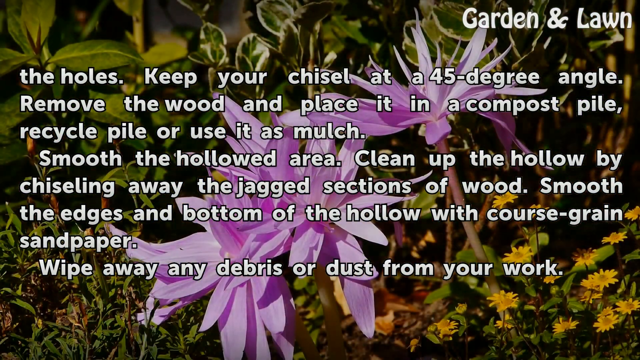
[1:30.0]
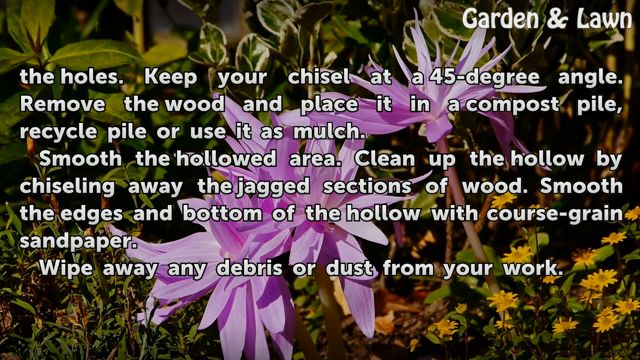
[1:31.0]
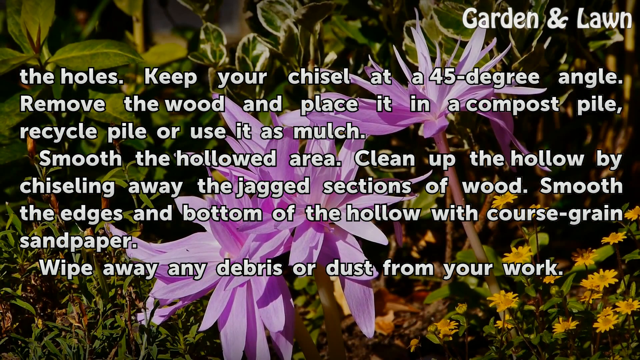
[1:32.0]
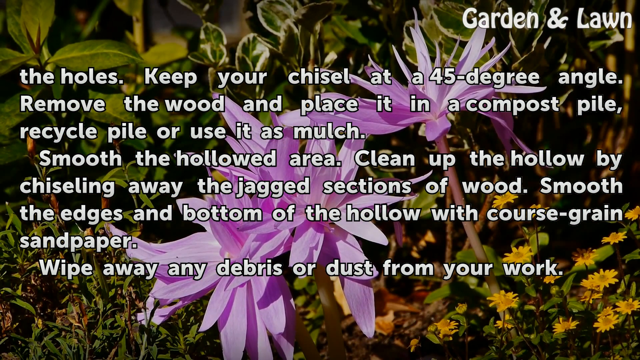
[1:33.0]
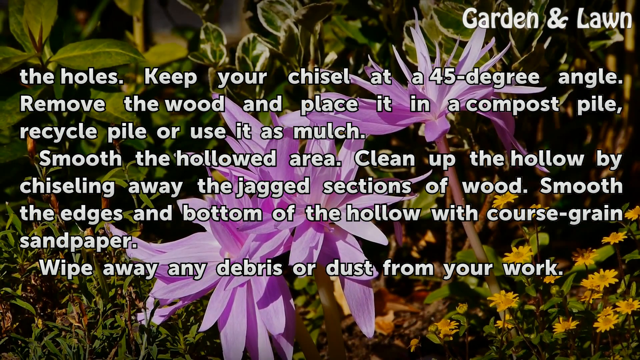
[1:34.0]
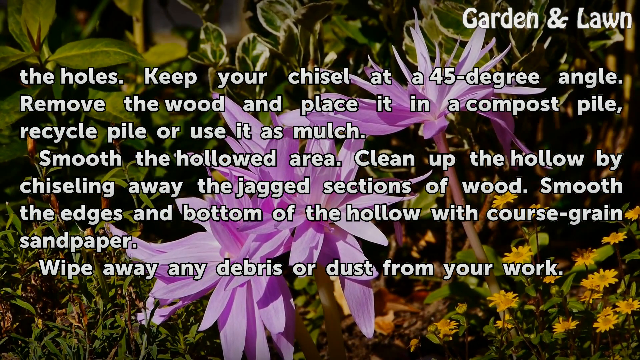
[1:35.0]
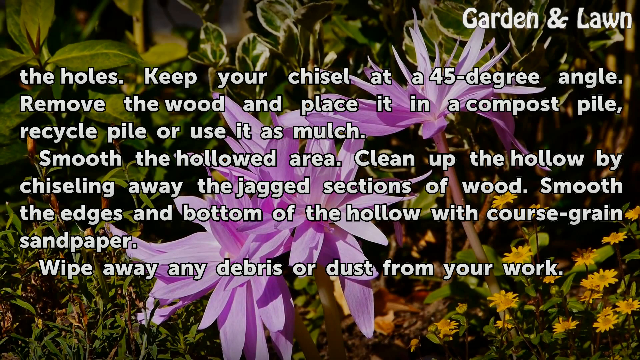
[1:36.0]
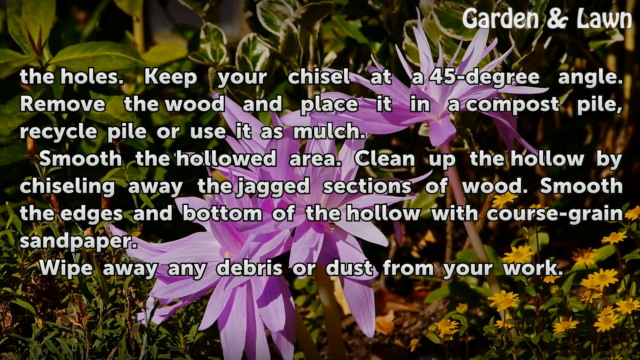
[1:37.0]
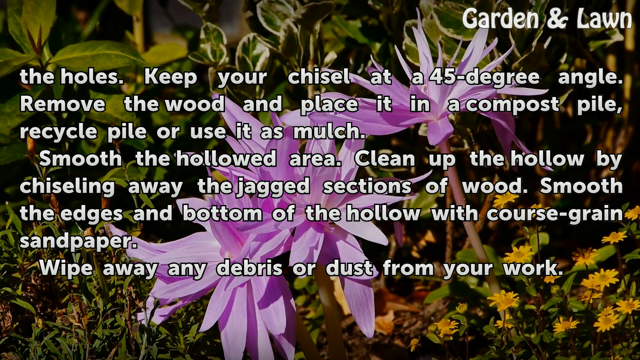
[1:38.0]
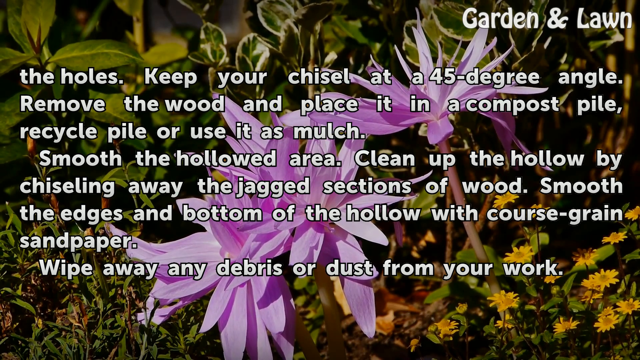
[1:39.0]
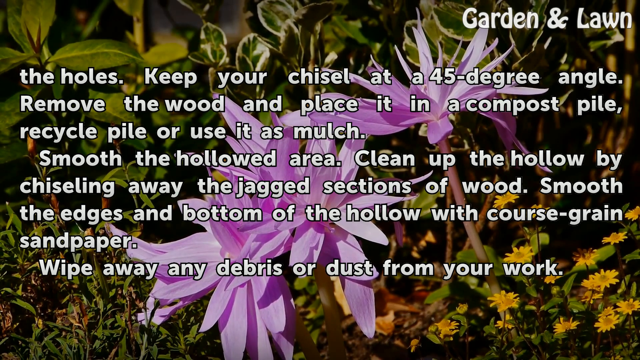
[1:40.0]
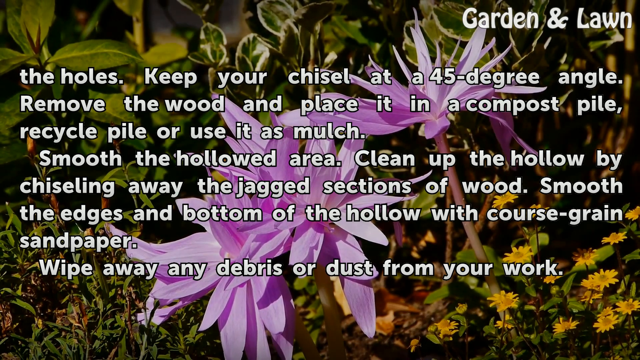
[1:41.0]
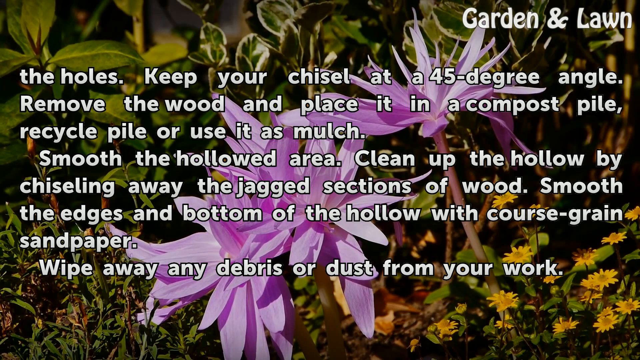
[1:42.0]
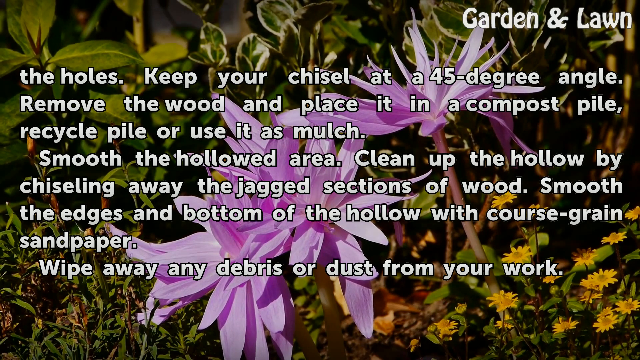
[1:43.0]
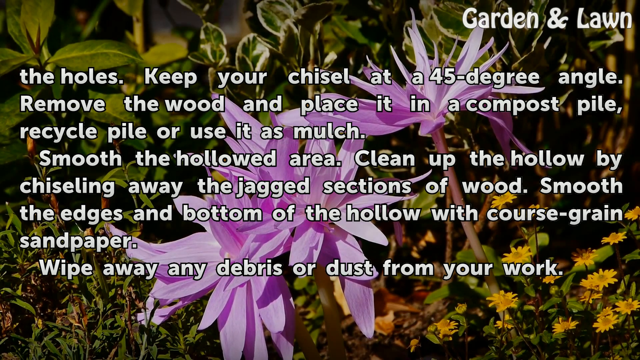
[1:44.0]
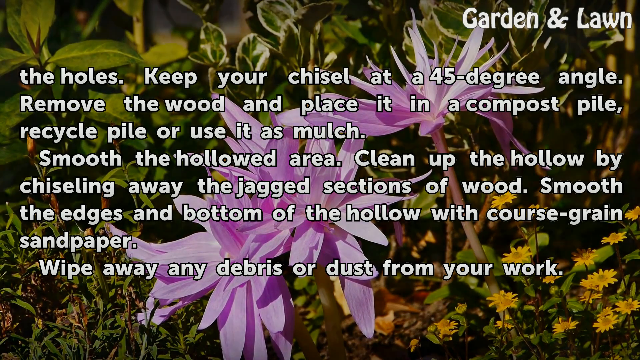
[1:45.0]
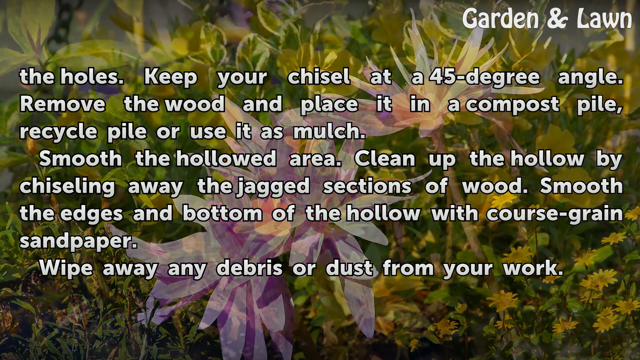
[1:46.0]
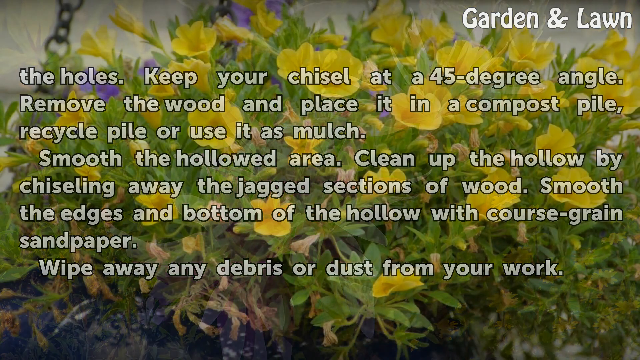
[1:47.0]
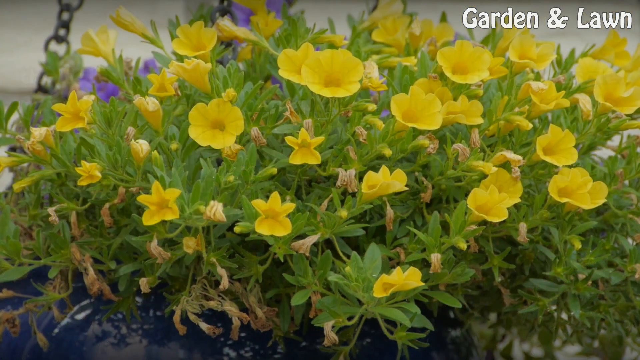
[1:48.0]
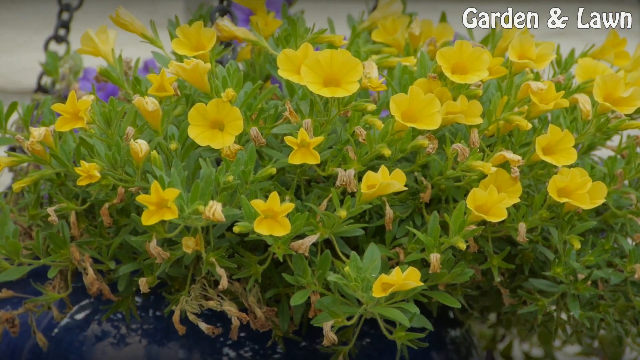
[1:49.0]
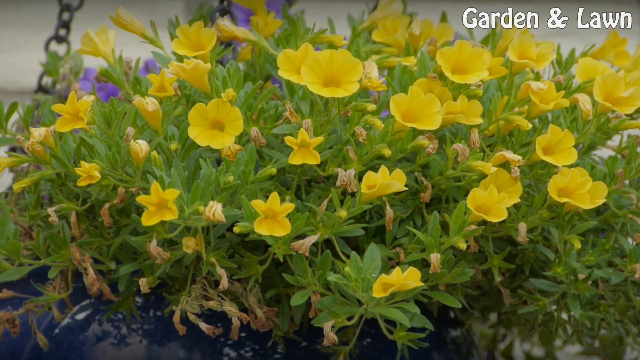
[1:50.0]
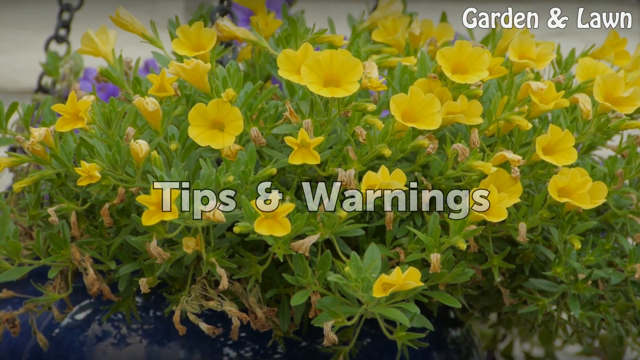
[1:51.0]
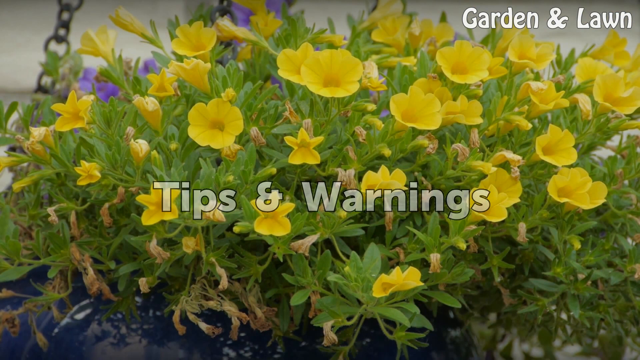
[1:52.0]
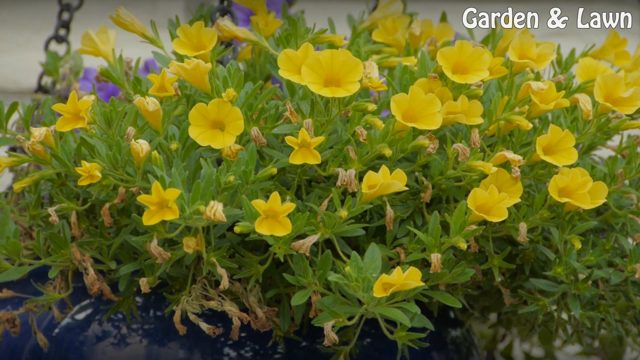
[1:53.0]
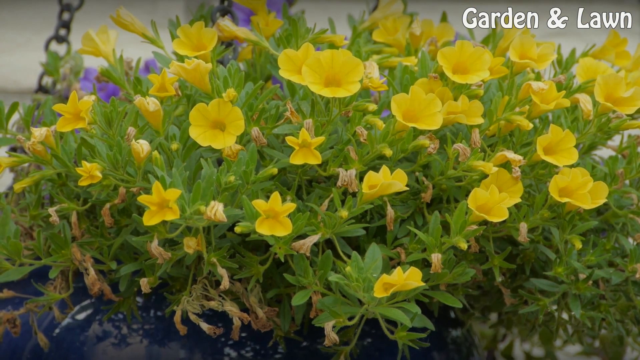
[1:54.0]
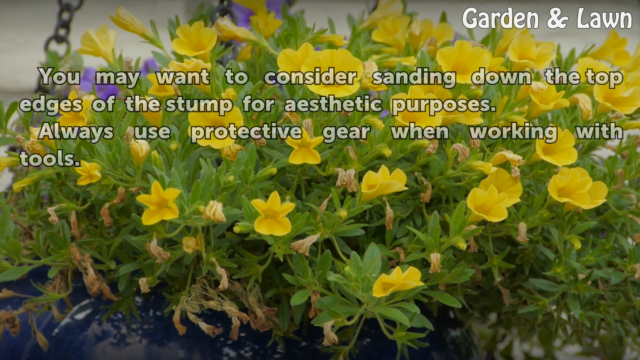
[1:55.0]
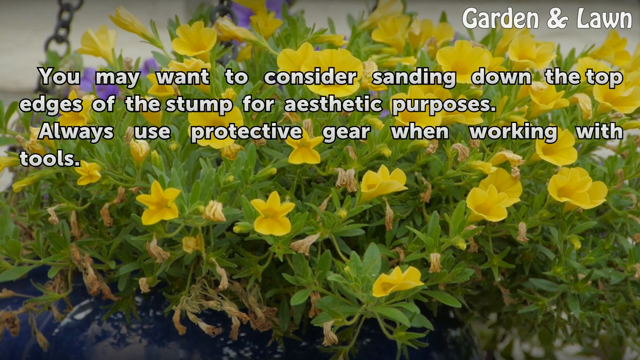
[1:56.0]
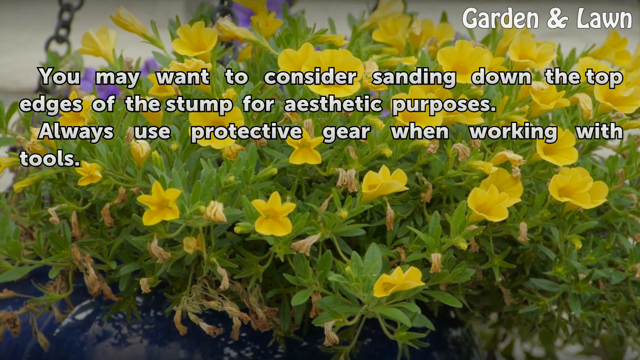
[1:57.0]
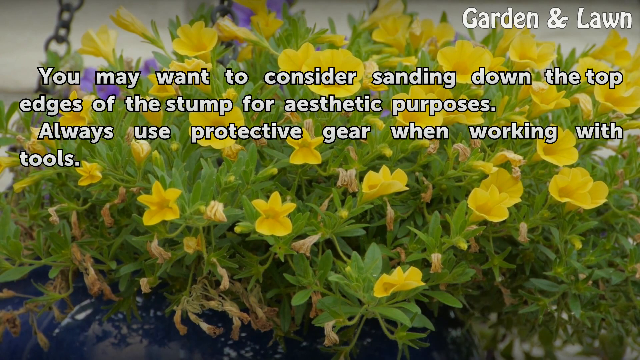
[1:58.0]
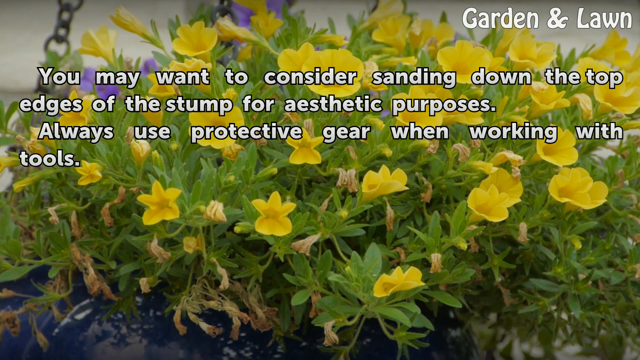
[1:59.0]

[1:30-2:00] A message says the holes in the stump need to be drilled fairly evenly all around, followed by "keep your chisel at a 45-degree angle. Remove the wood and place it in a compost pile, and recycle the pile or use it as mulch. Smooth the hollow area. Clean up the hollow by chiseling away the jagged sections of the wood, and smooth the edges and bottom of the hollow with coarse-grained sandpaper. Wipe away any debris or dust from the work area." Behind the text, kind of in the background, is a long-petaled purple flower with wind blowing across it slightly, its petals shivering and shaking. The image then changes to yellow flowers, and "tips and warnings" pops up for just a second. The text then reads "you may want to consider sanding down the top edges of the stump for aesthetic purposes. Always use protective gear when working with tools."